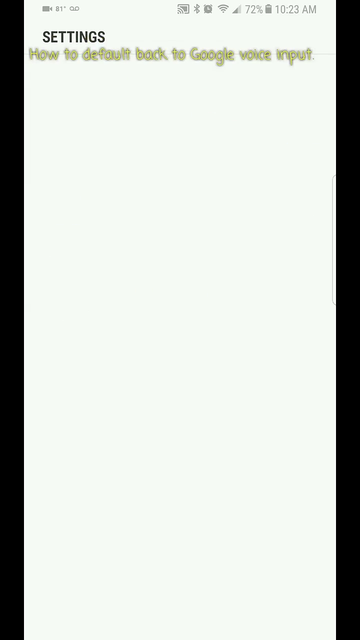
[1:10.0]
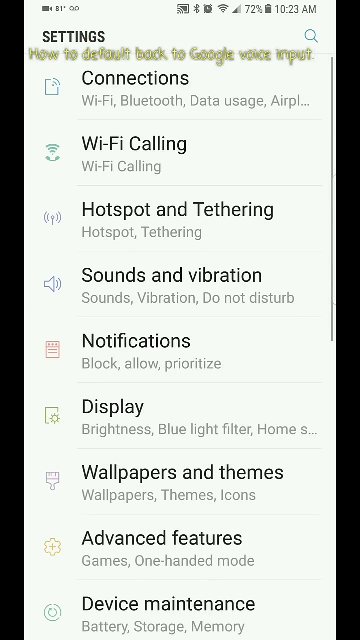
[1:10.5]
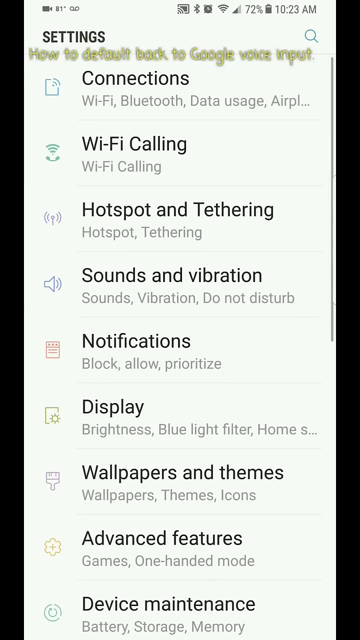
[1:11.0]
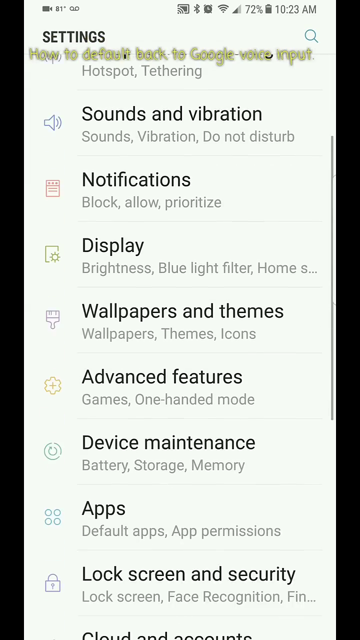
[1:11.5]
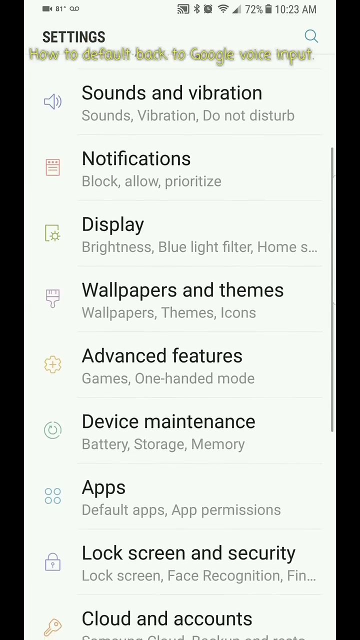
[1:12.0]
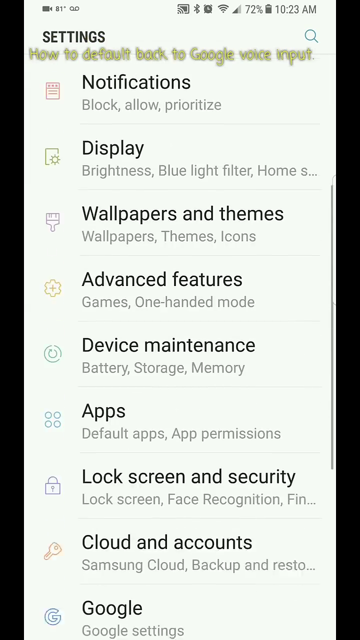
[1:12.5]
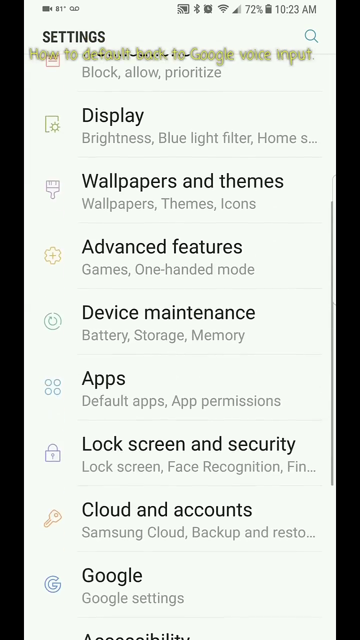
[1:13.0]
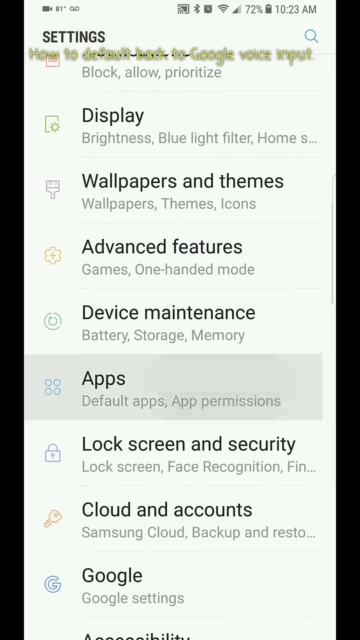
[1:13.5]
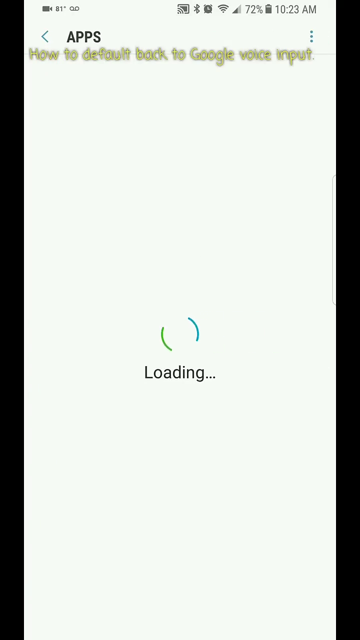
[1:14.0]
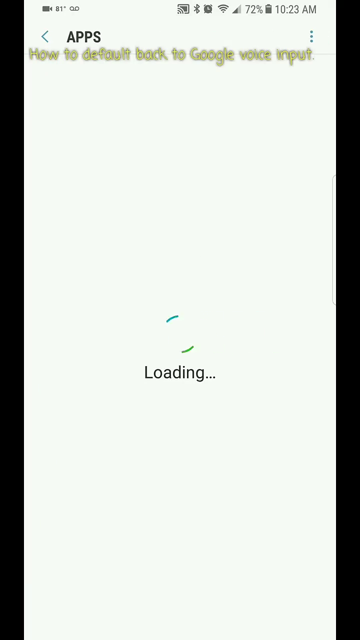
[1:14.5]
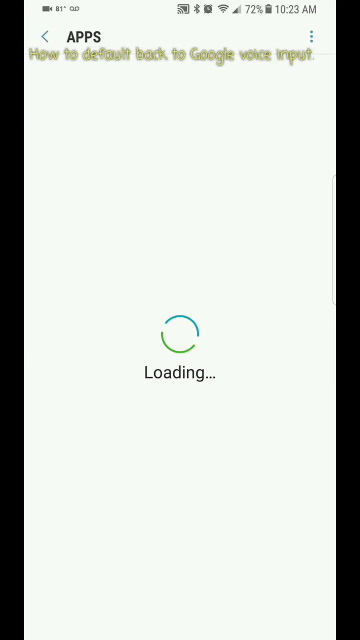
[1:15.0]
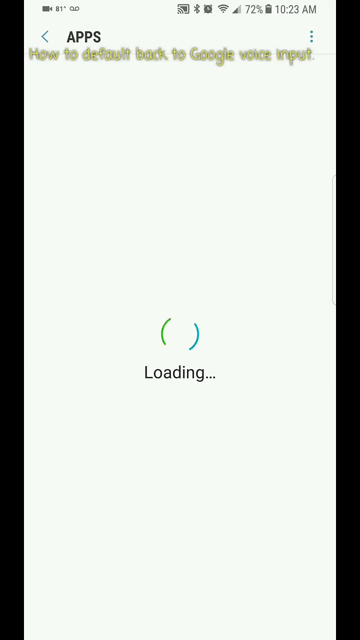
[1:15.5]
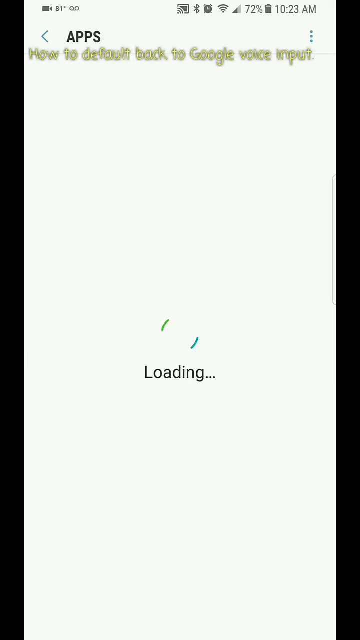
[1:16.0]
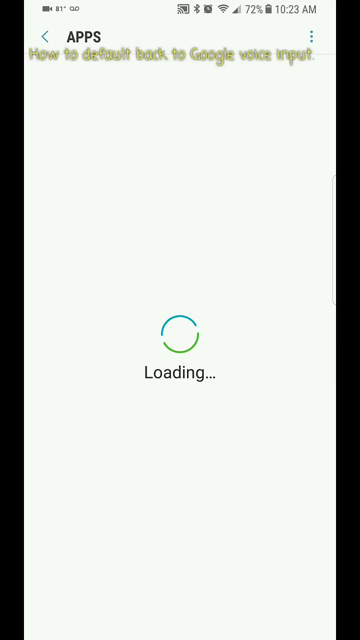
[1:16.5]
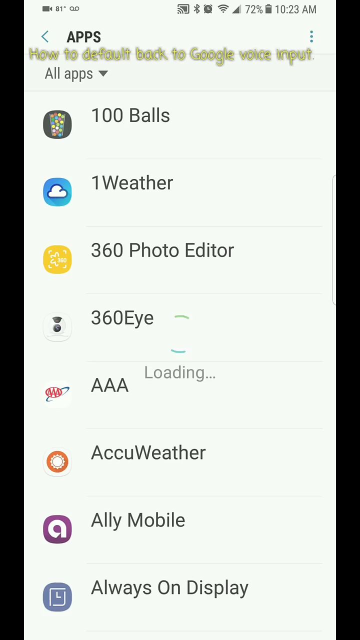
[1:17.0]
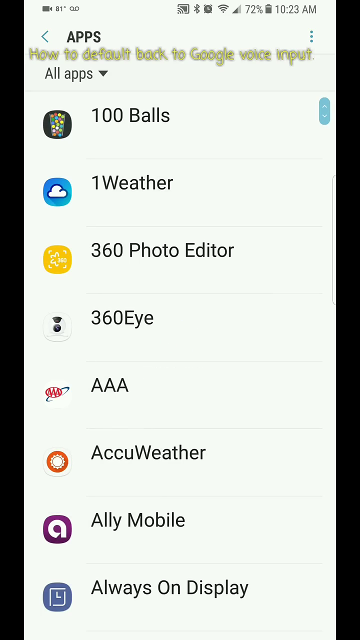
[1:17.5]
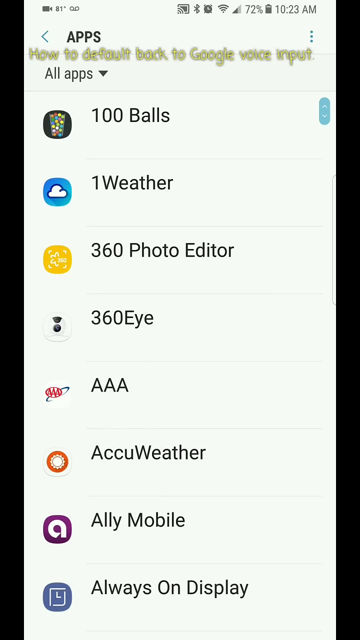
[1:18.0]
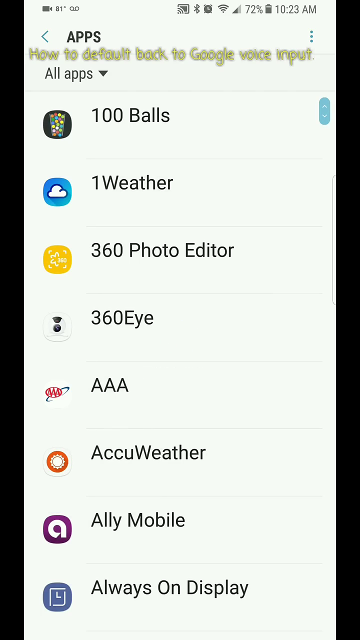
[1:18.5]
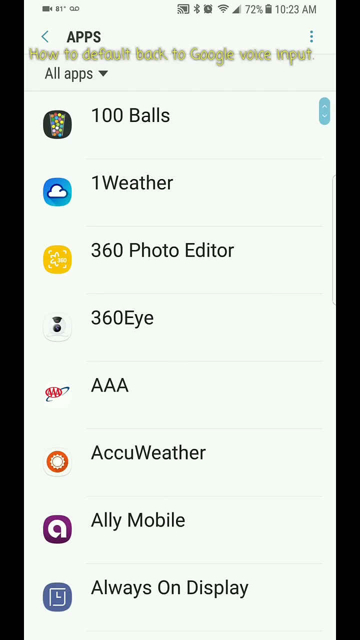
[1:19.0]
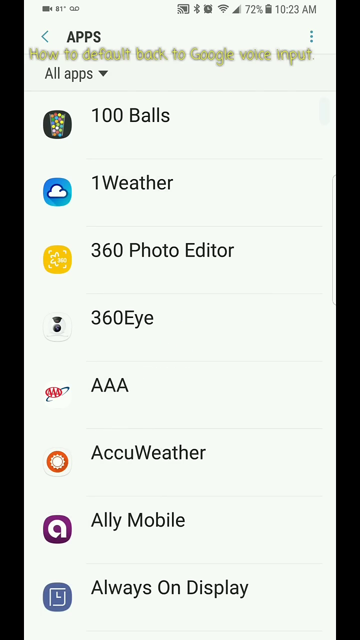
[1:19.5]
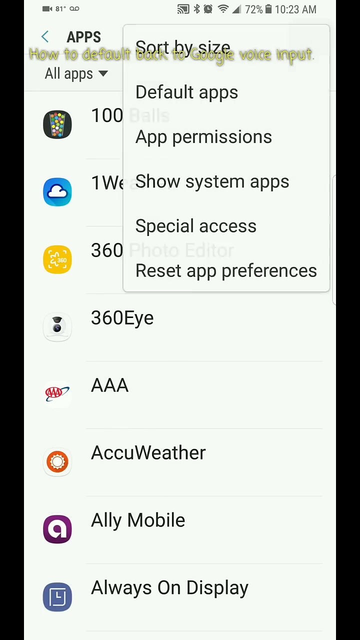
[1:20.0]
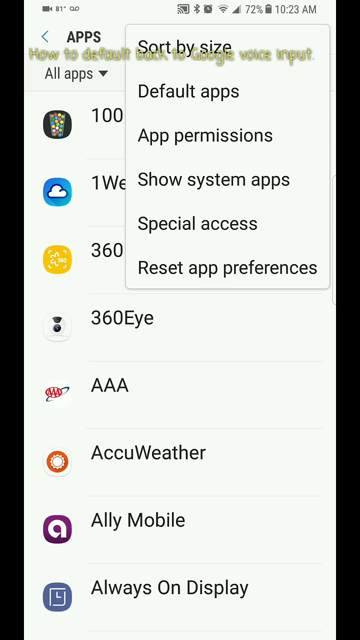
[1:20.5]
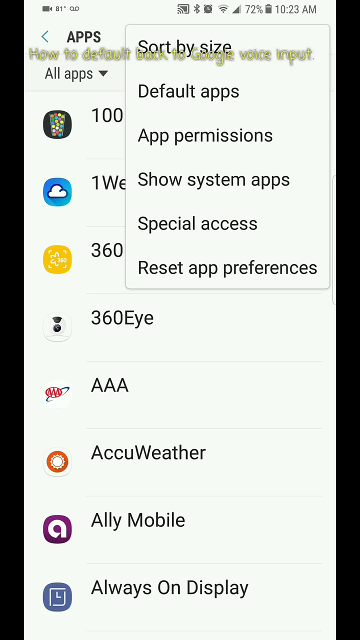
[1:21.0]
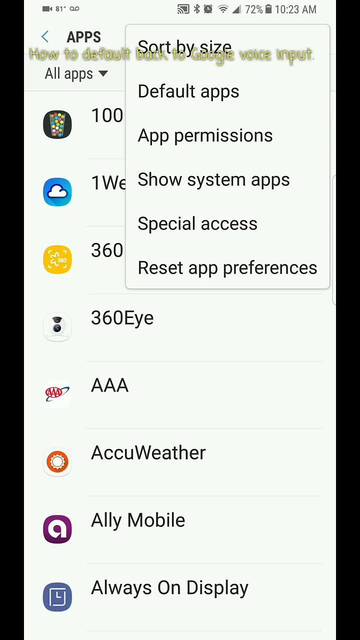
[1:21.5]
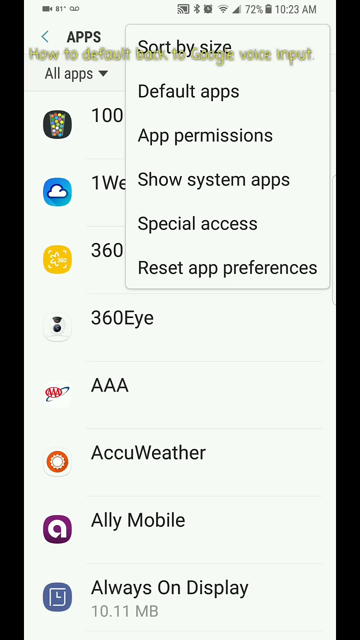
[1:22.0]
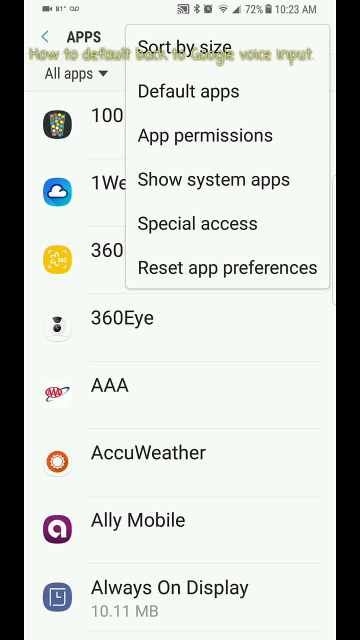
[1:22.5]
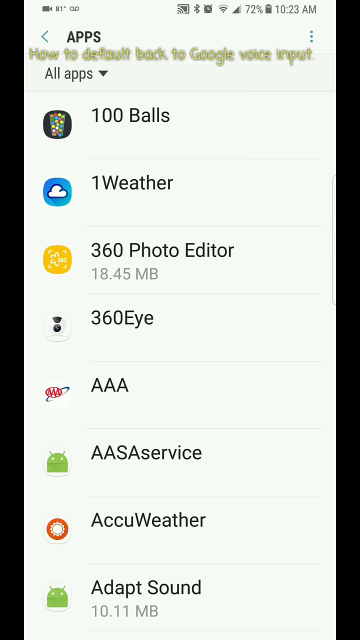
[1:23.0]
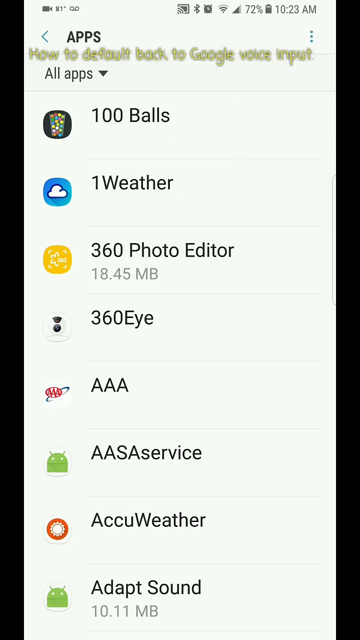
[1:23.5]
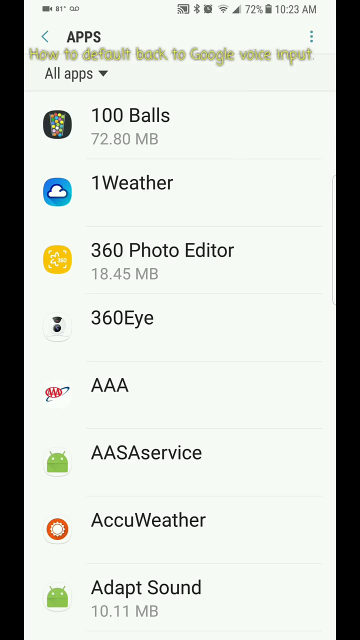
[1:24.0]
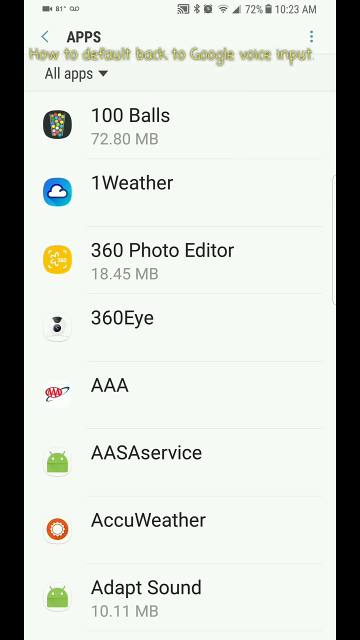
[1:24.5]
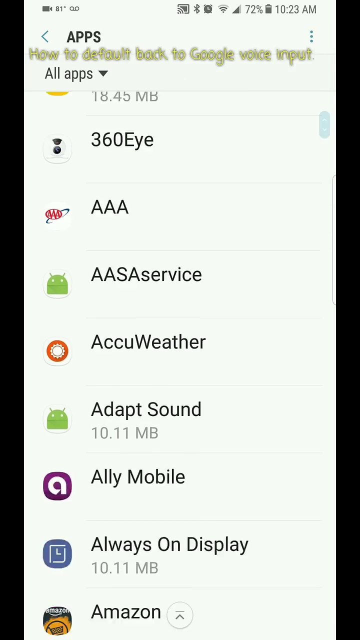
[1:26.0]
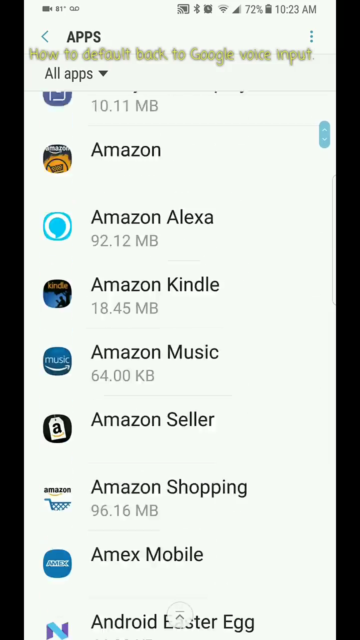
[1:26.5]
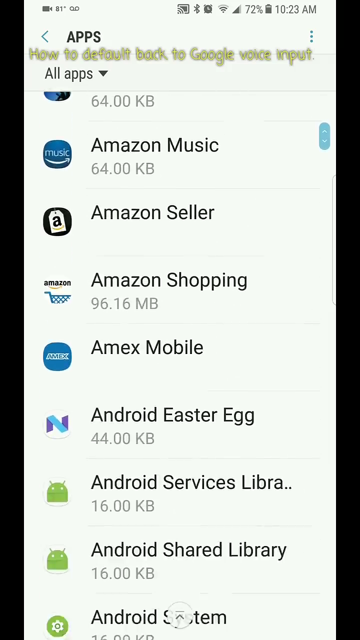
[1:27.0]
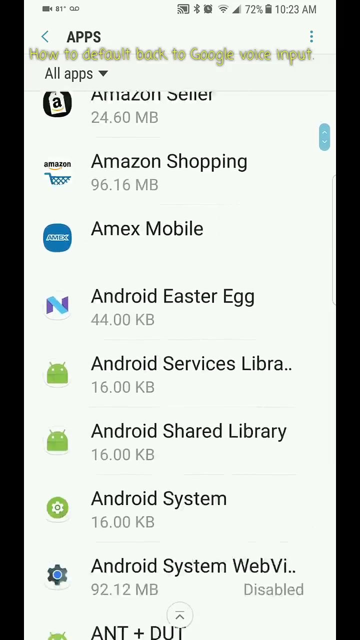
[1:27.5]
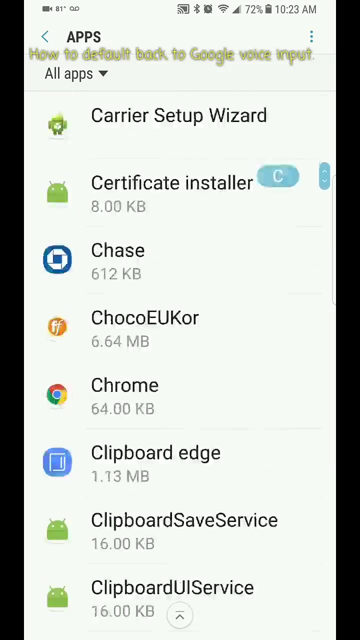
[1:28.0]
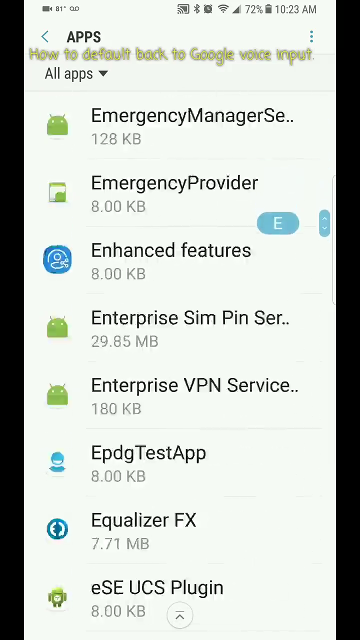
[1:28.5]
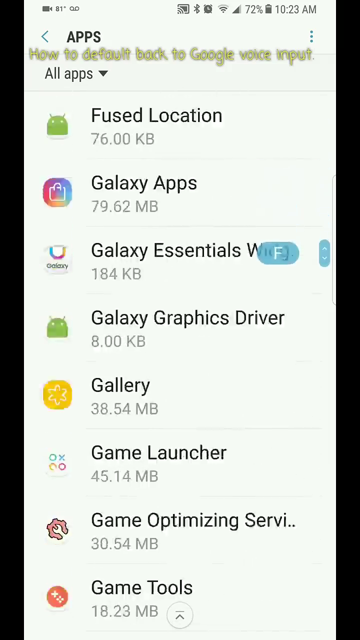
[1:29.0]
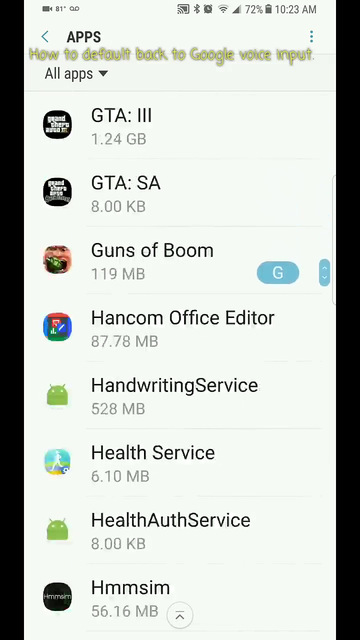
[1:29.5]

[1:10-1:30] The screen is white apart from the notifications, time, and battery at the top, with "settings" in black and the yellow how-to text beneath it. The user scrolls down through settings categories, each with a small image beside it: "wi-fi calling" in bold with smaller gray "wi-fi calling" text under it, hotspot, sound and vibration with a microphone-like icon, display, and more. After scrolling further, they click apps, and a green and blue buffering wheel spins for a moment. The apps list appears, starting with "100 balls"; about four apps with numbers come first, followed by "triple a". To the right is a blue up-and-down arrow; tapping it brings up a pop-up box that includes "sort by size". After clicking off it, app sizes appear, such as 72.8 megabytes for 100 balls, along with one for photo editor. The list scrolls far down into the G's and H's.